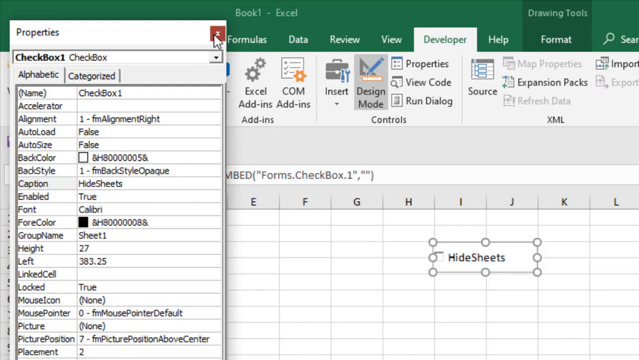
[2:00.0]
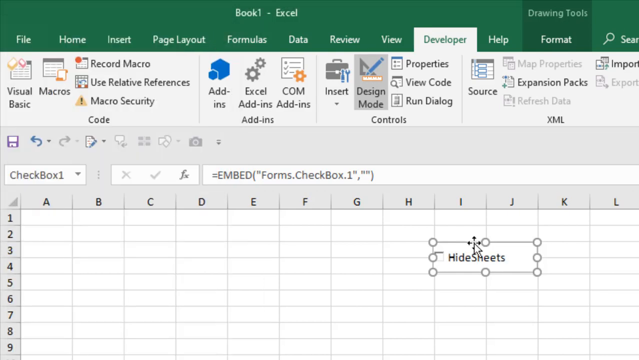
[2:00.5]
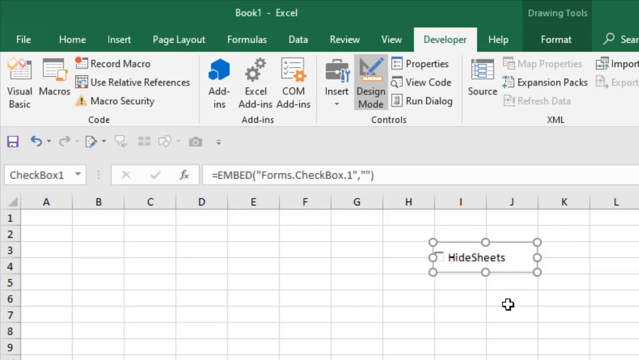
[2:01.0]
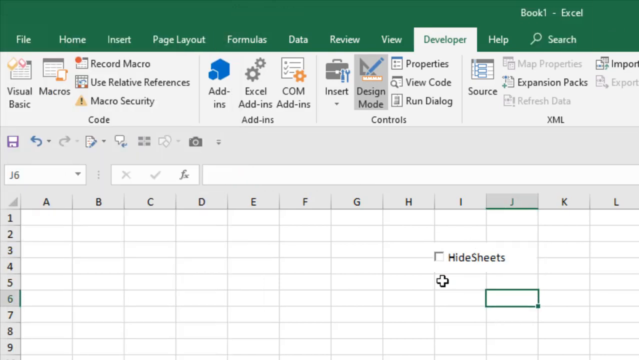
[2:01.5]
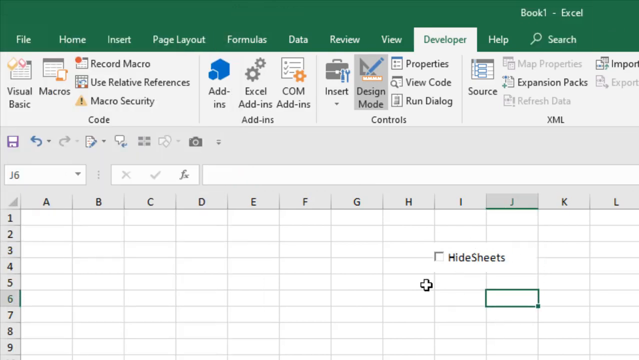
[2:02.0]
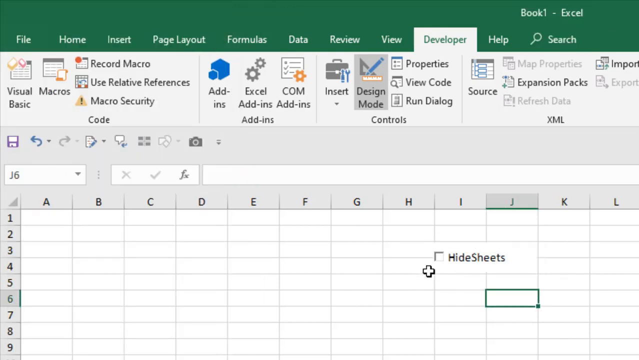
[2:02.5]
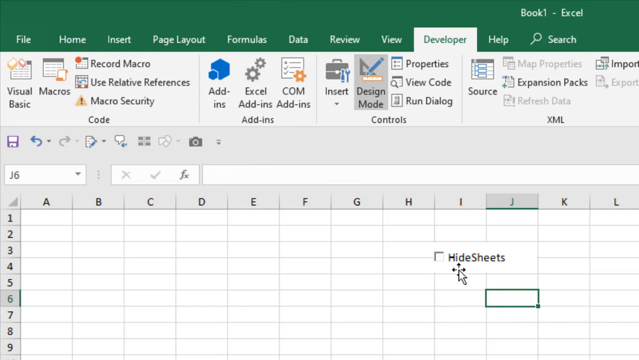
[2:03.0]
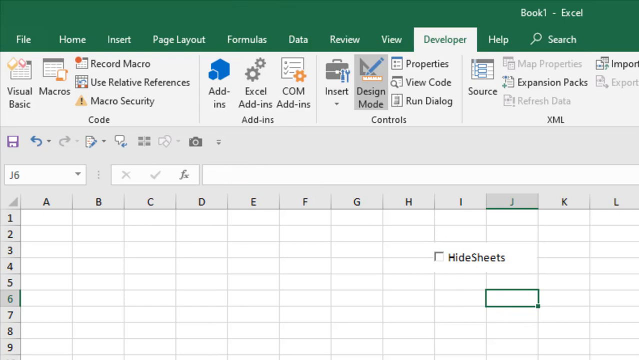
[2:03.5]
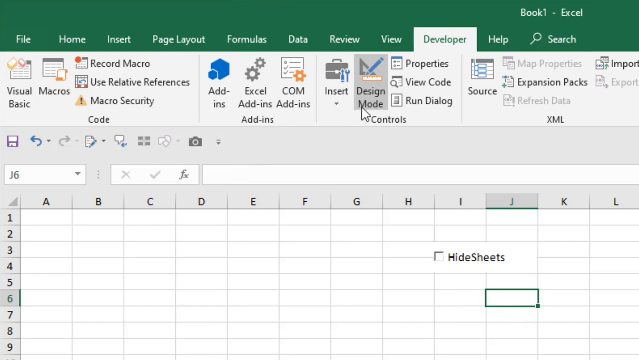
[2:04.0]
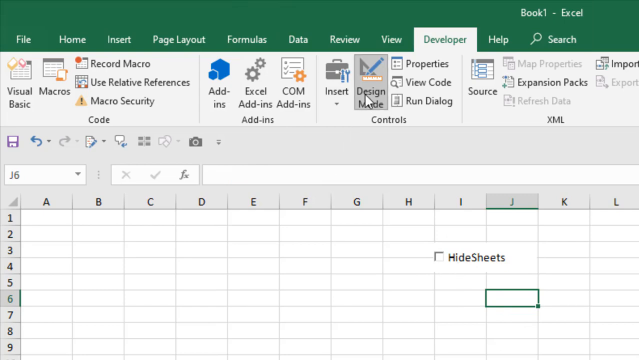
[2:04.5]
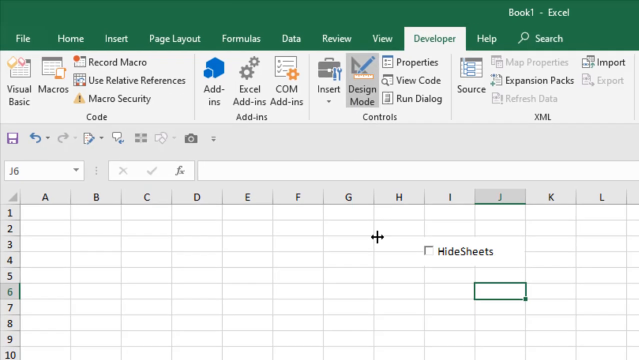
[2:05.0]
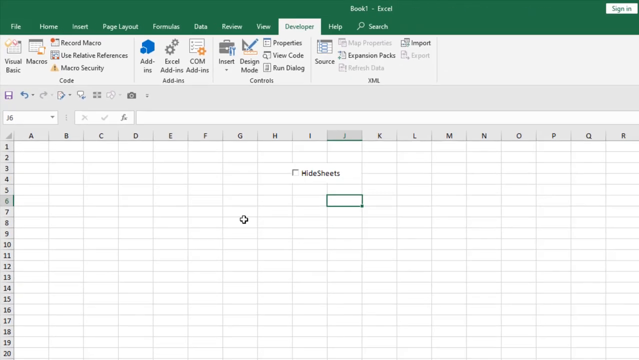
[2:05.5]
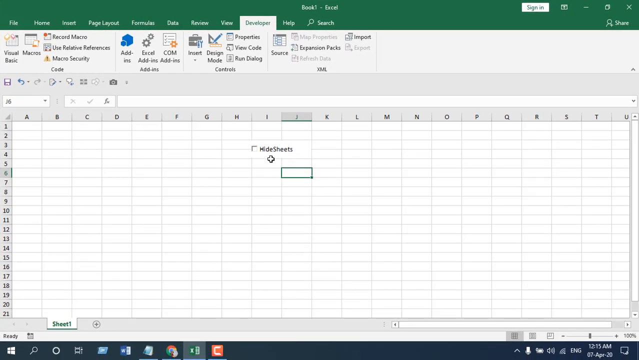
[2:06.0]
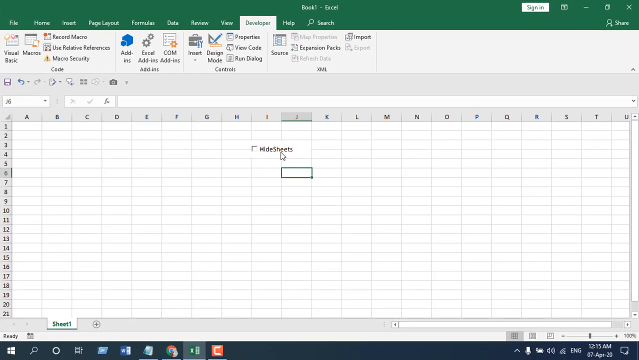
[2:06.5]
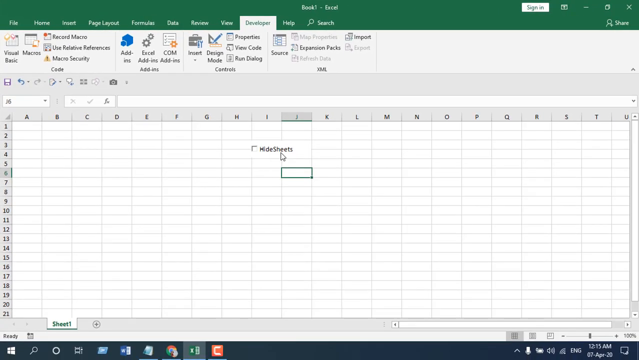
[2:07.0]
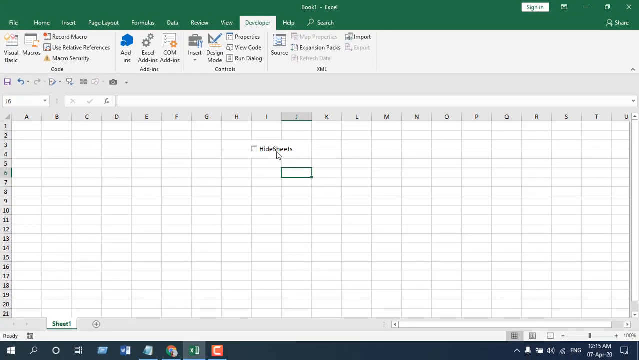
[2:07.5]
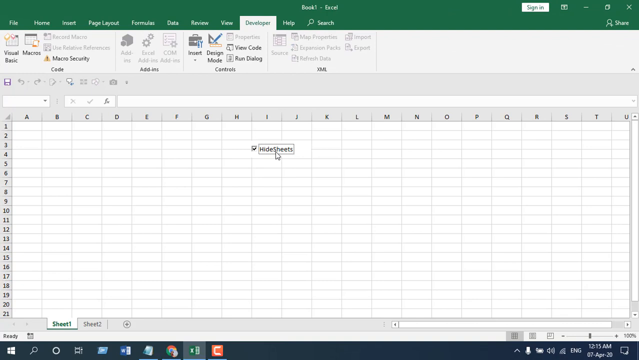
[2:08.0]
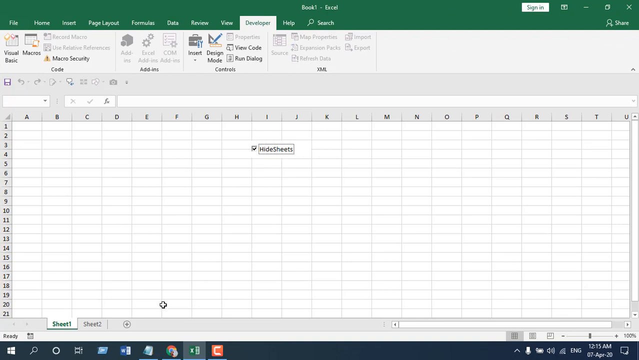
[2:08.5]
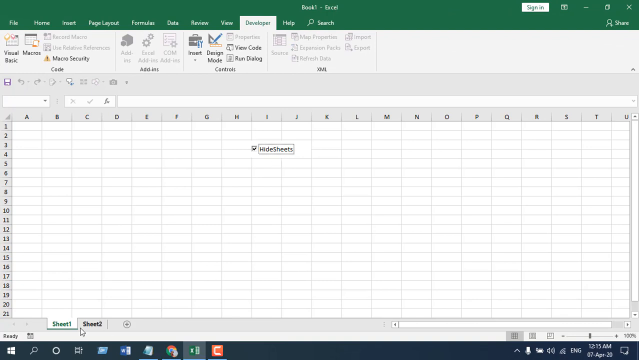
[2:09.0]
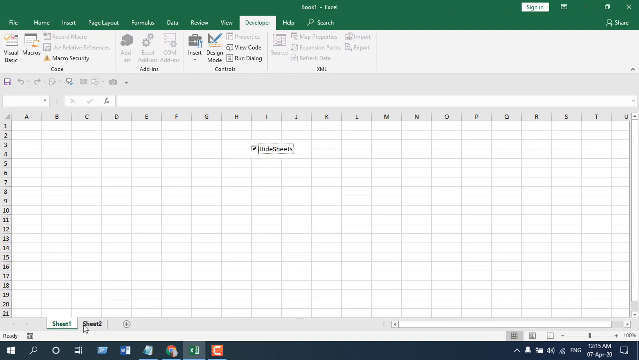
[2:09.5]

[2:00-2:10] A green stripe runs across the top of the computer screen with the words "File," "Home," "Insert," "Page Layout," "Formulas," "Data," "Review," "View," "Developer," "Help," "Format" and "Search" side by side from the top left-hand corner. Beneath it are many other options and tabs, including ones reading "Visual Basic," "Macros," "Record Macros" and "Use Relative Preferences," a blue octagon with "Add-ins" beneath it, gray gears to the right of that, and "Excel Add-ins" beneath. Below that, columns A to L run left to right and rows 1 to 9 are visible. The person moves the mouse up and clicks a tab labeled "Design Mode," then clicks a small square on the sheet that says "hide sheet."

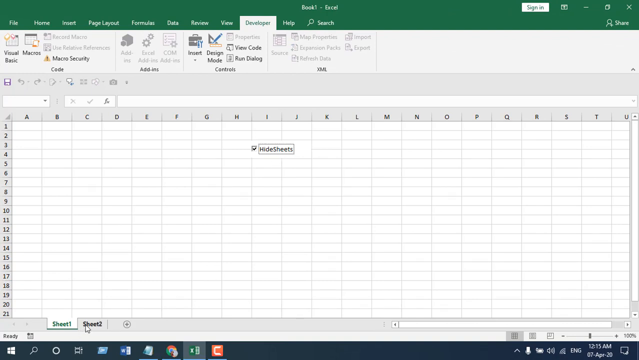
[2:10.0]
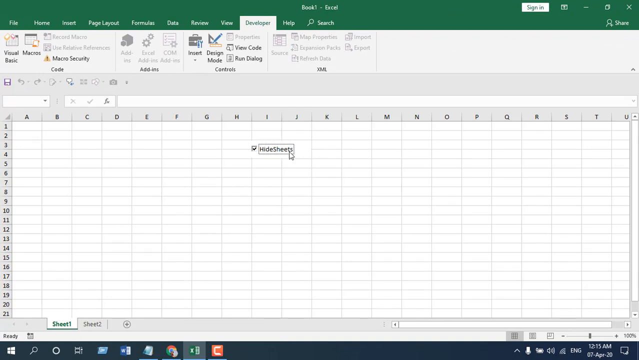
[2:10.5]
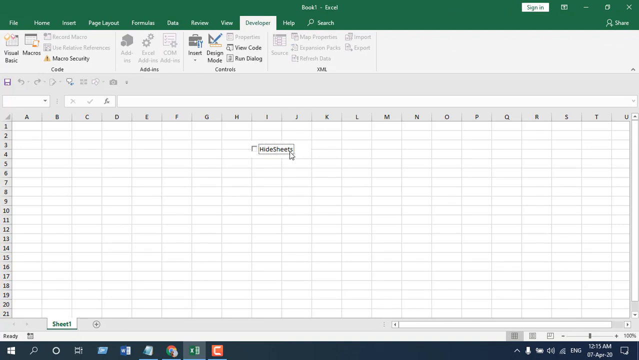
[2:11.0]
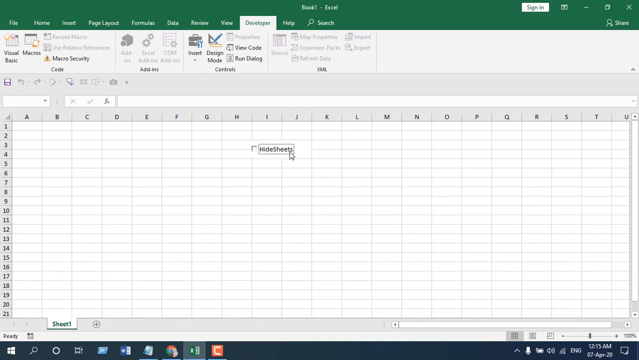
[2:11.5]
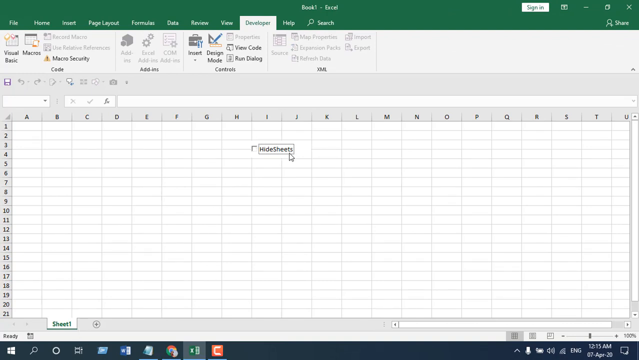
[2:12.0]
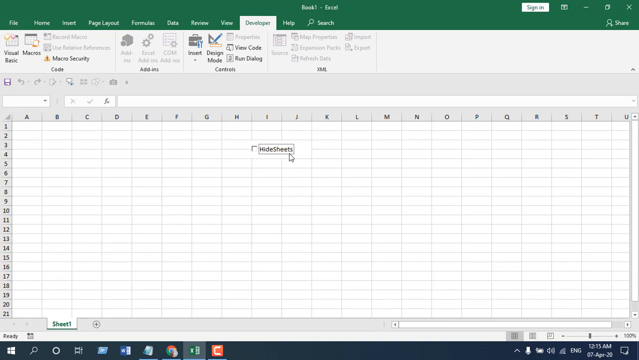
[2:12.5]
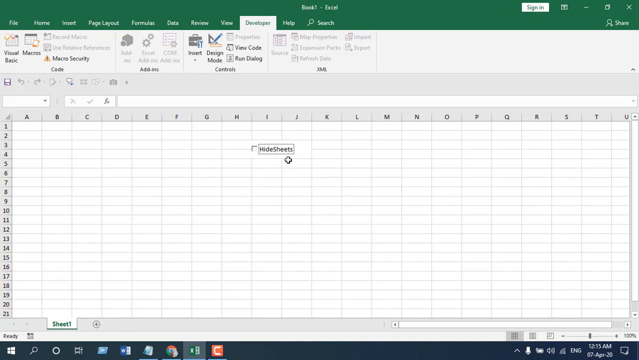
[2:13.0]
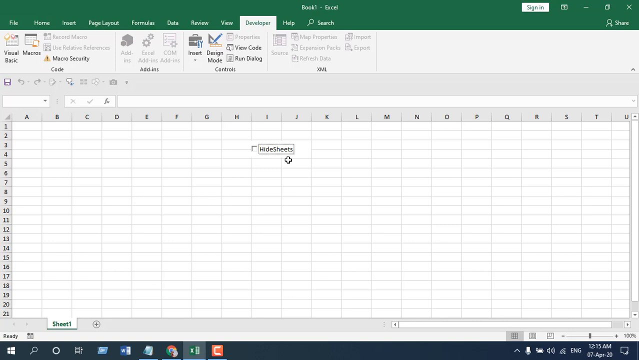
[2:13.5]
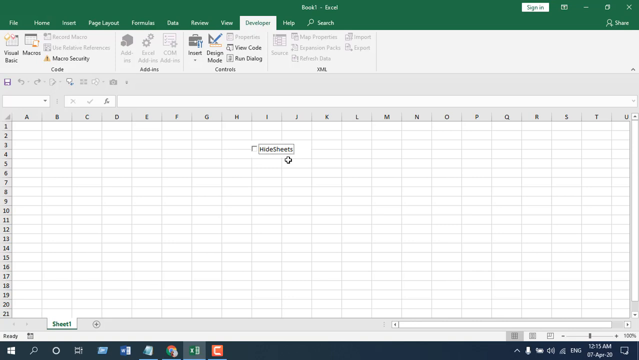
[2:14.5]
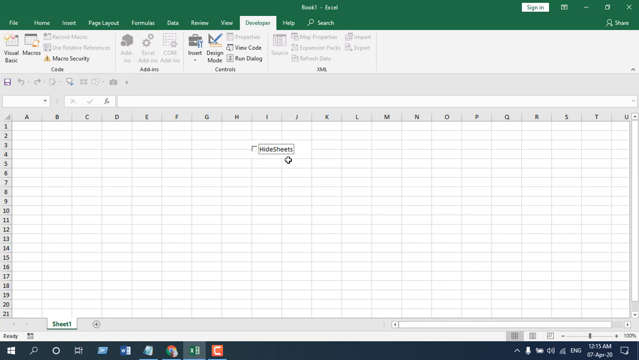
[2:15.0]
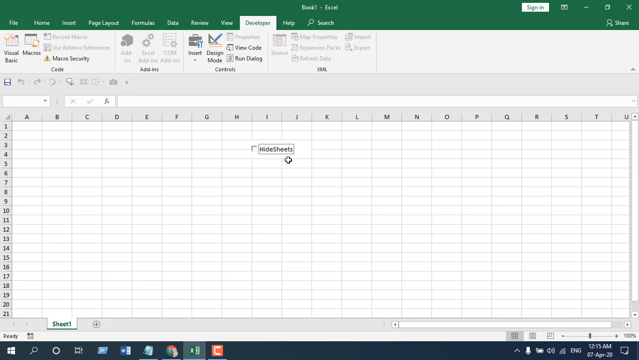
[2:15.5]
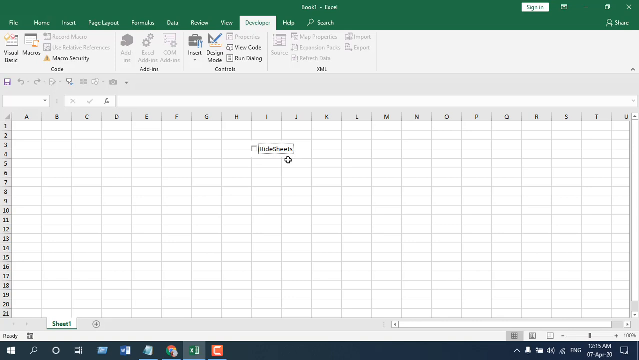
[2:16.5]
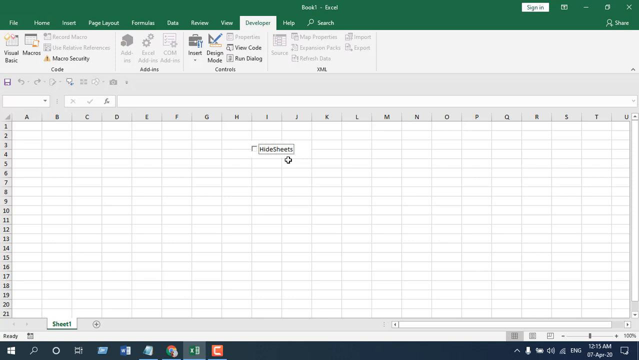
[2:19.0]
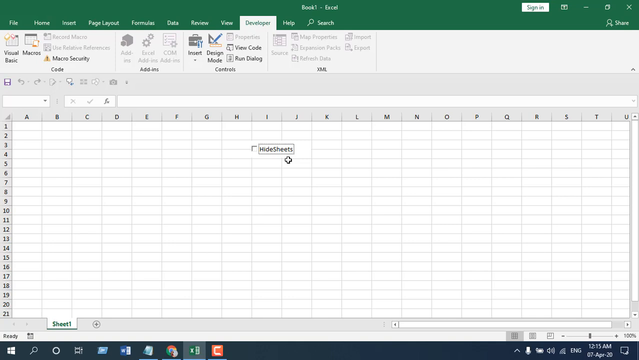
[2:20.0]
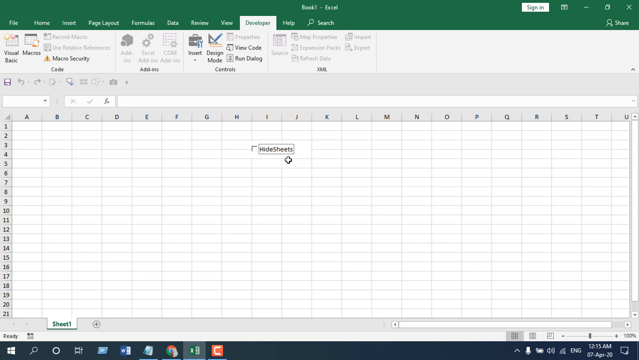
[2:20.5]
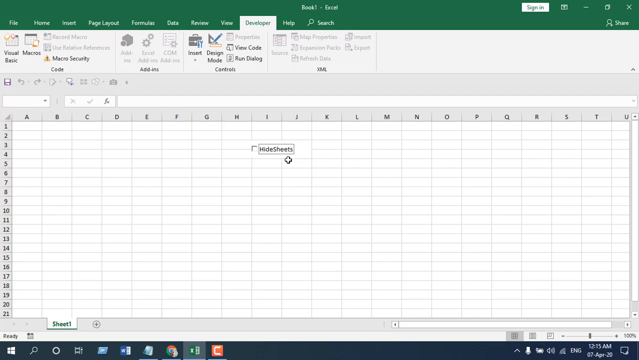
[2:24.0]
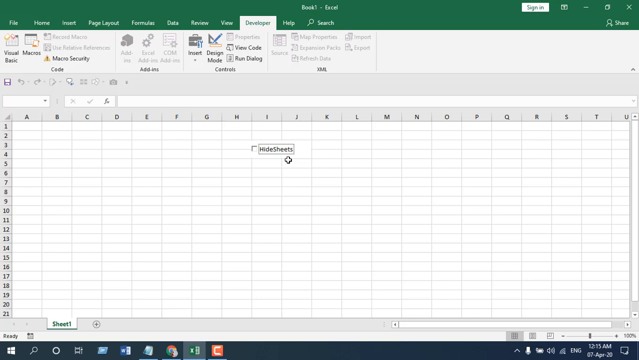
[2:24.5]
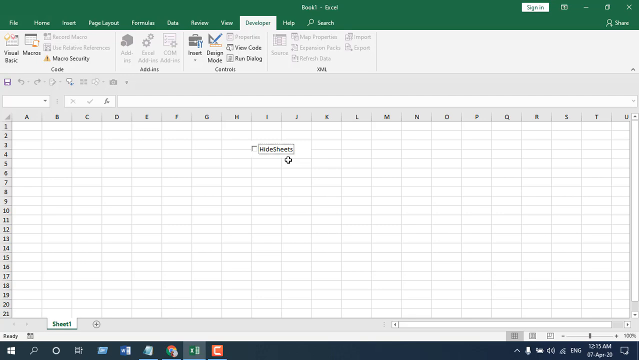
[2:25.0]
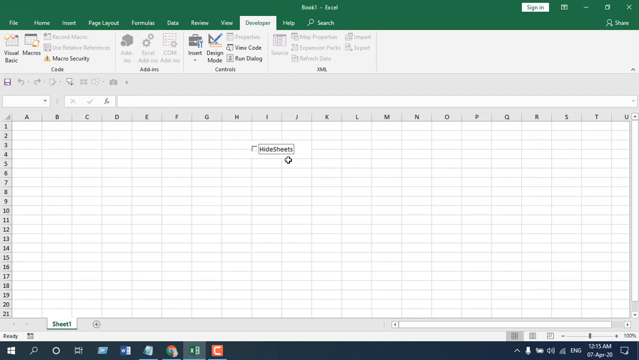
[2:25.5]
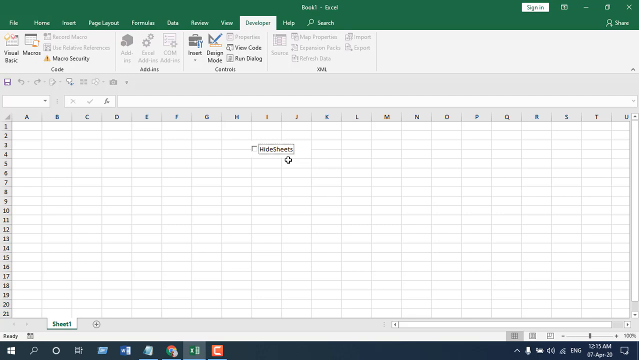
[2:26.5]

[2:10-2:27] The green stripe at the top of the computer screen holds, in white and side by side from the top left-hand corner, the words "File," "Home," "Insert," "Page Layout," "Formulas," "Data," "Review," "View," "Developer," "Help" and "Search," and above "Search" it says "Book 1 - Excel." Beneath are other tabs that can be pushed; the highlighted ones say "Visual Basic," "Macros," "Macro Security," "Add-ons," "Insert," "Design Mode," "View Code," "Run Dialog," "Controls" and "XML." Below that is a graph with columns from A to U and rows from 1 to 21. In row three of column I is a small rectangle with "hide sheets" written in black inside it, and the person clicks on it with the mouse.